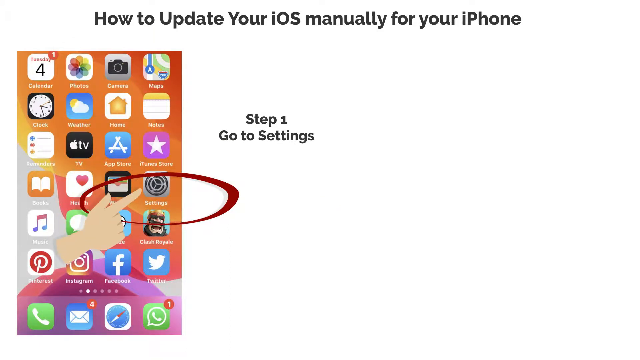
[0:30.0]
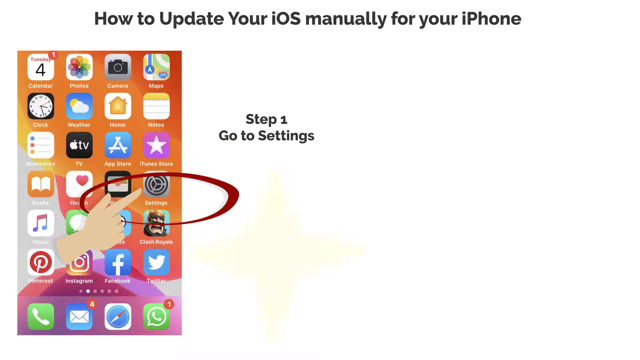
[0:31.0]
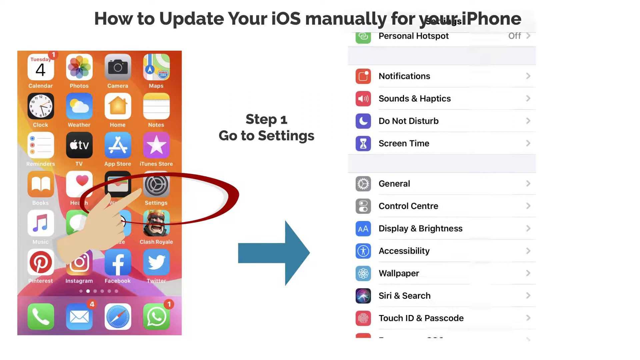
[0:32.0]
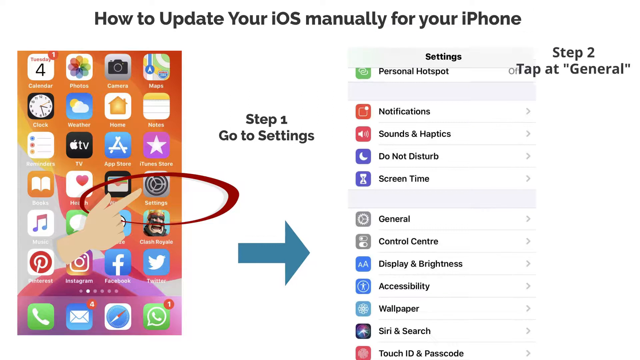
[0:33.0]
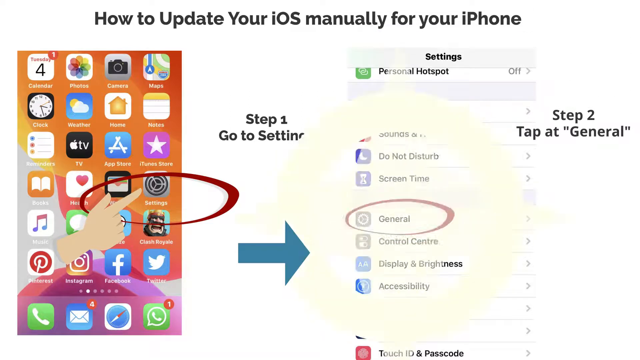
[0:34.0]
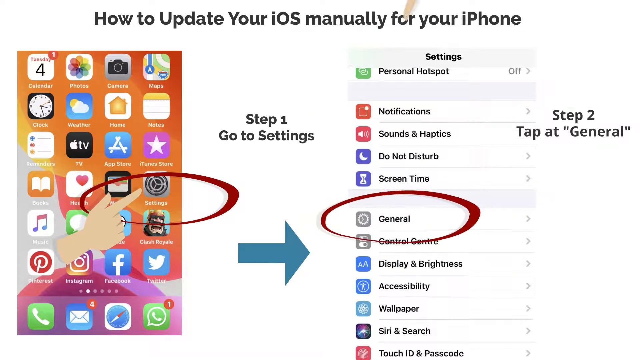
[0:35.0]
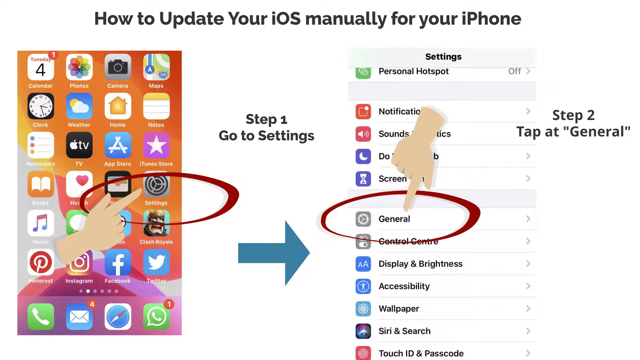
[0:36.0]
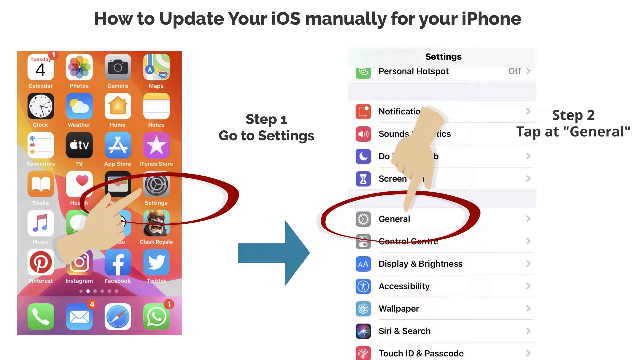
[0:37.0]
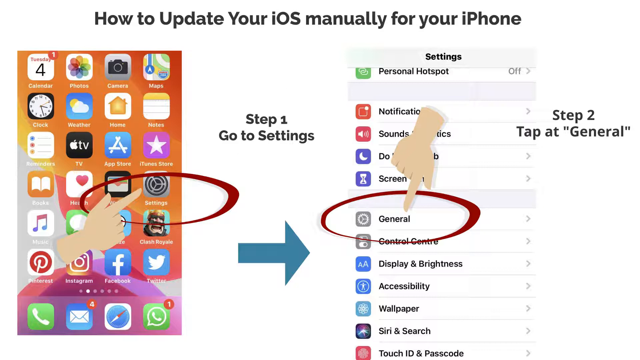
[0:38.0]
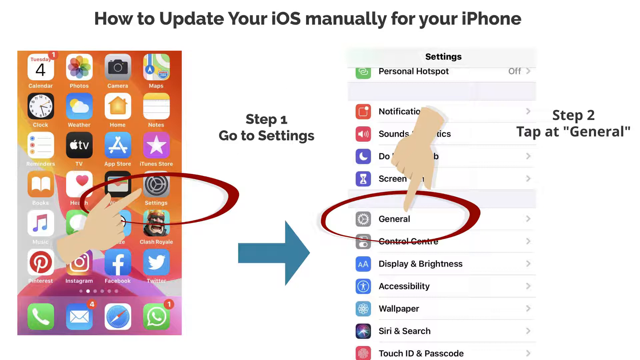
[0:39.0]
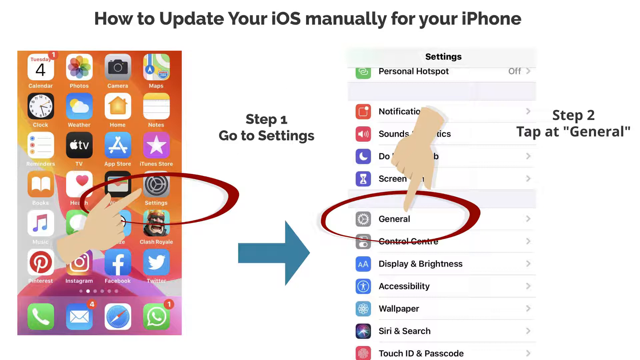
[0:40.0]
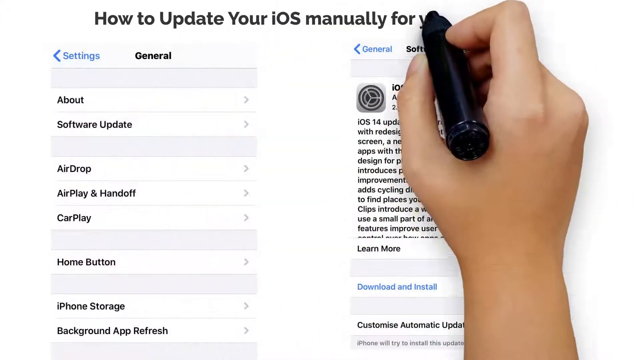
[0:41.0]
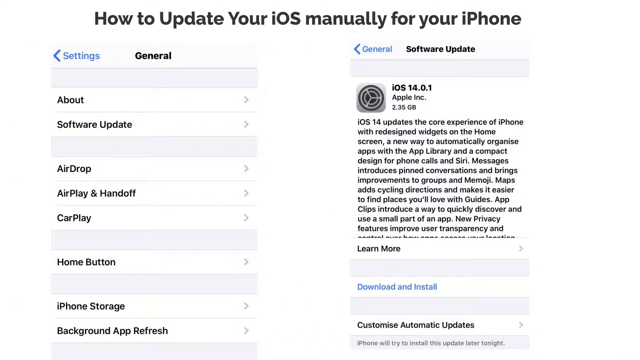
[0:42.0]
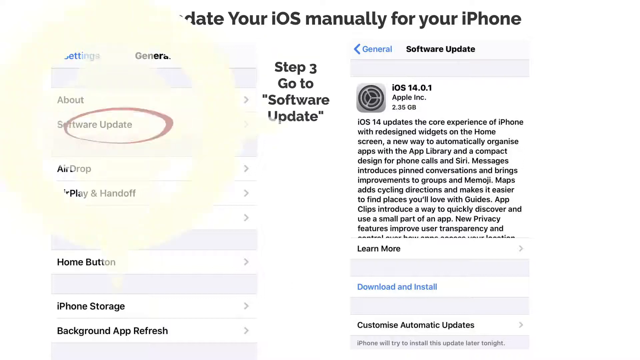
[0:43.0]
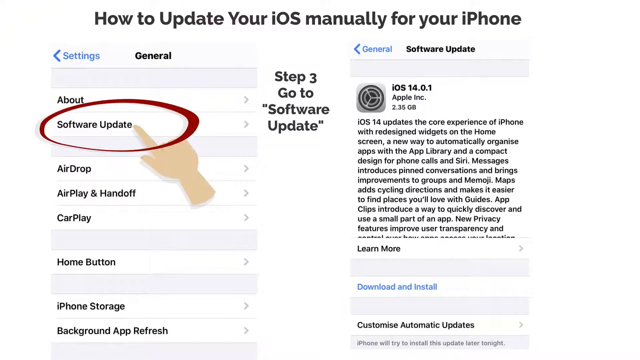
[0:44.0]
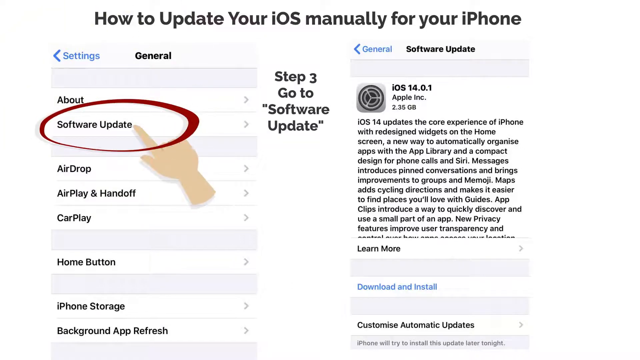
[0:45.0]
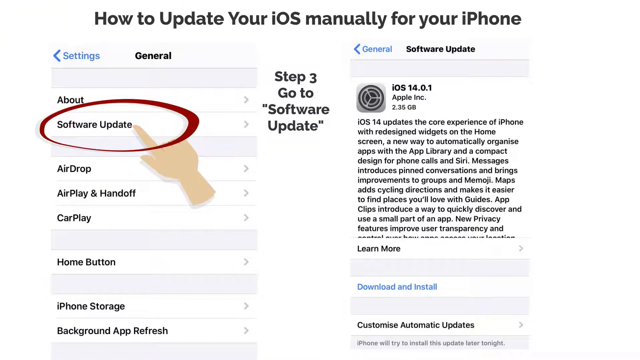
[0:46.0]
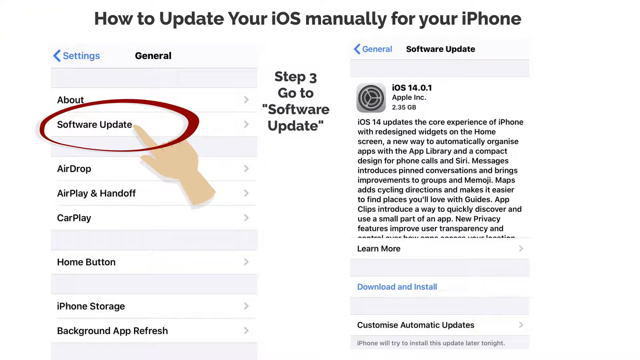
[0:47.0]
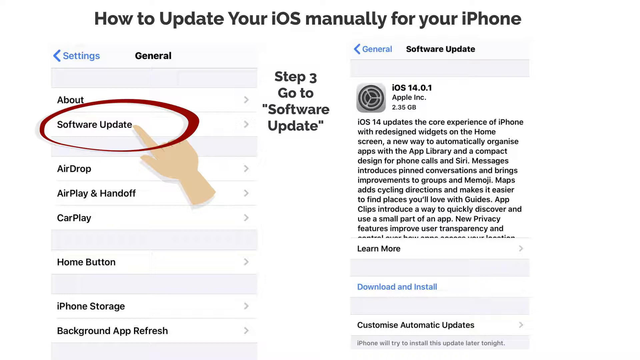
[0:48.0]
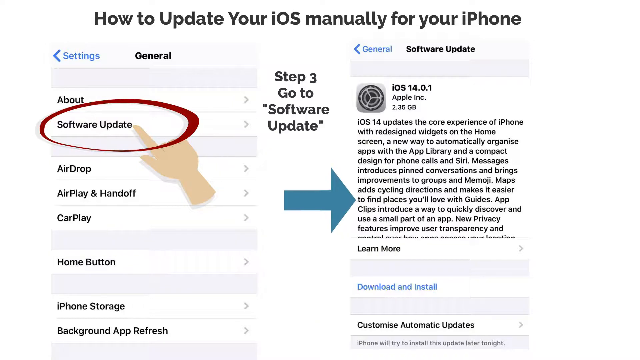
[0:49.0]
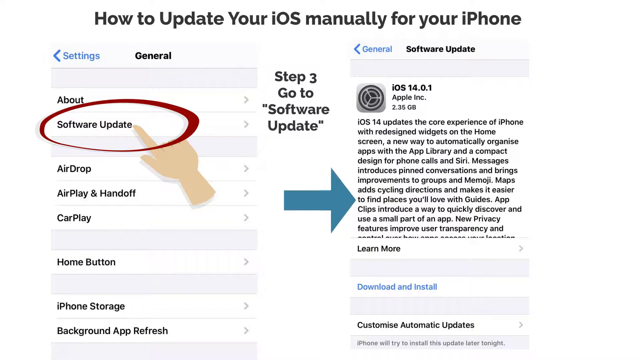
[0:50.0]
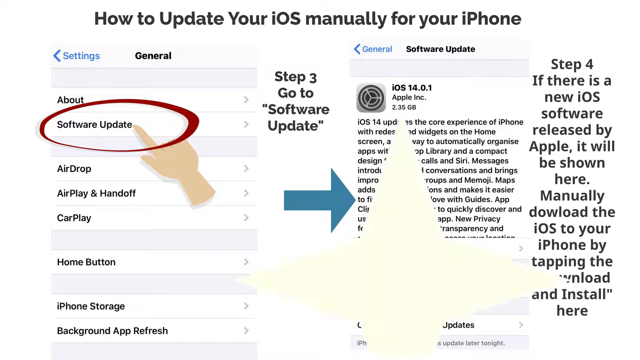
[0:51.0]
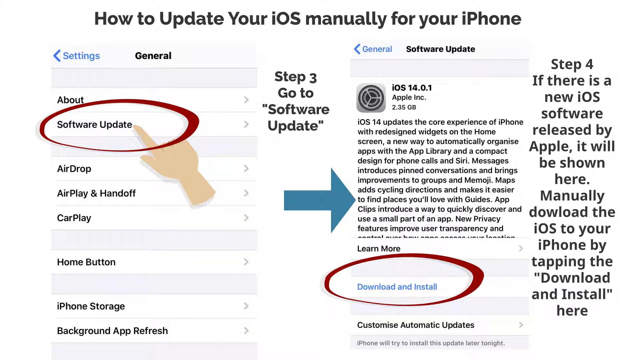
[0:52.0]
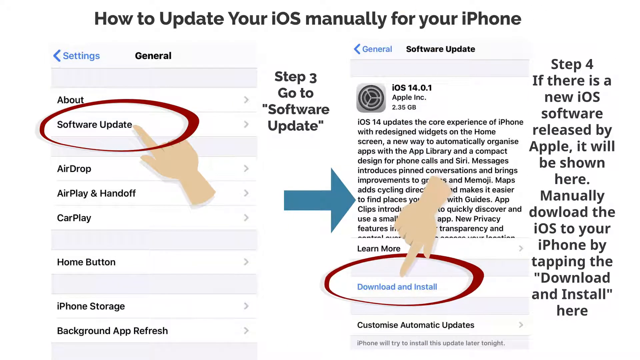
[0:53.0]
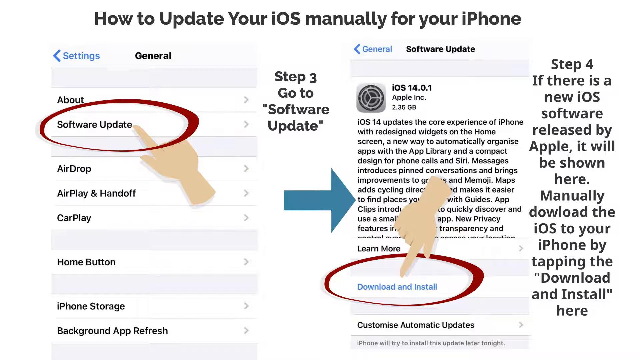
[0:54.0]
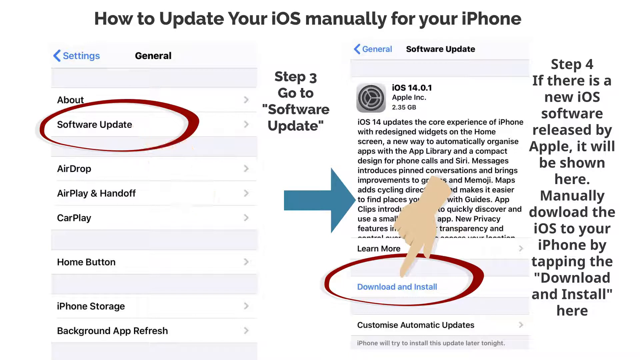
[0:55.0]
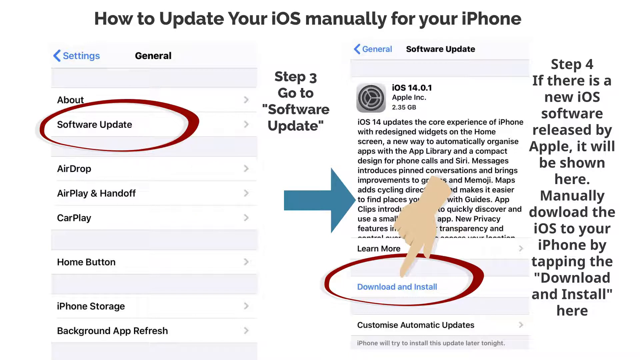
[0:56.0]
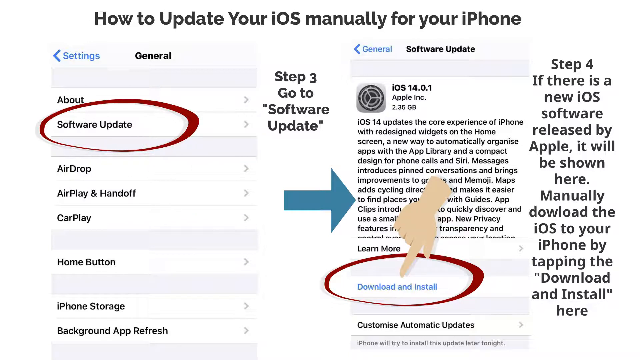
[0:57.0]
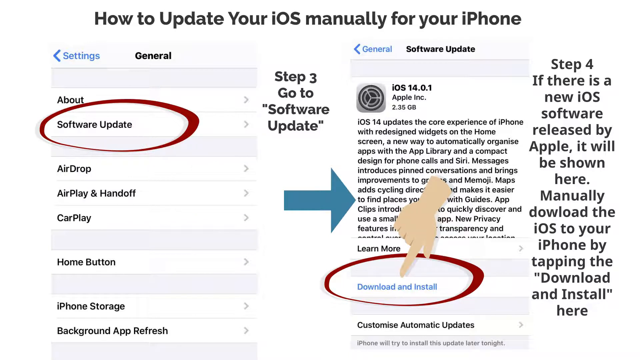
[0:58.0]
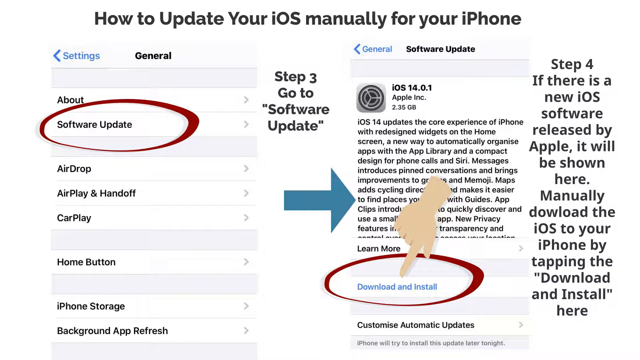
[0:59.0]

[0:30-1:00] On the left side, an iPhone screen highlights the Settings icon, with a hand illustration showing that the user needs to click it. A blue arrow over the white background points to another iPhone screen, which goes with the text "Step 2, Tap at General". This second screen lists settings including Personal Hotspot, Notifications, Sounds and Haptics, Do Not Disturb, Screen Time, General, Control Center, Display Brightness, Accessibility and Wallpaper. The General option is highlighted by a red circle illustration, and the hand illustration appears over it, indicating the user should click it. Another hand then appears at the top of the screen, writing "how to update your iOS manually for your iPhone". Next, the General screen is shown on the left and the software update screen on the right; the left screen is the one that makes the updates happen, and the right one shows the features of the new version, iOS 14.0.1.